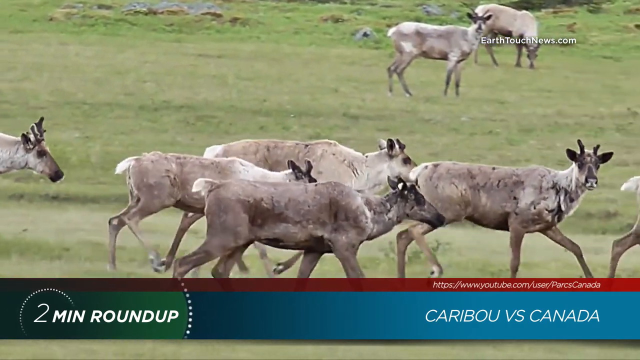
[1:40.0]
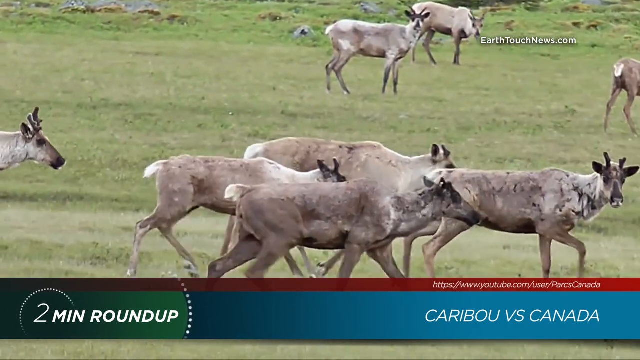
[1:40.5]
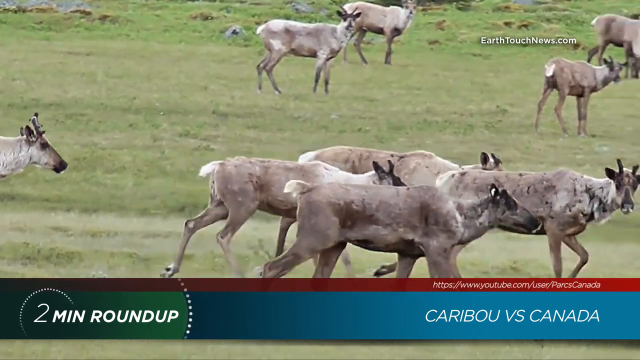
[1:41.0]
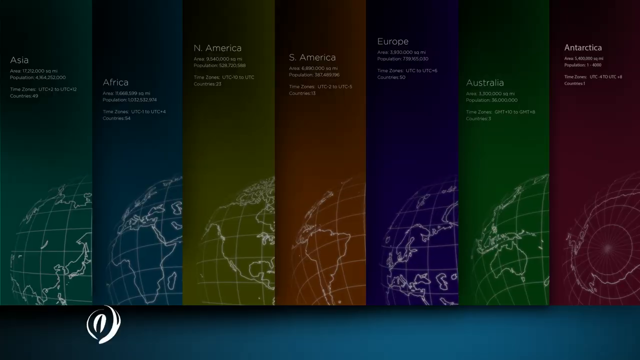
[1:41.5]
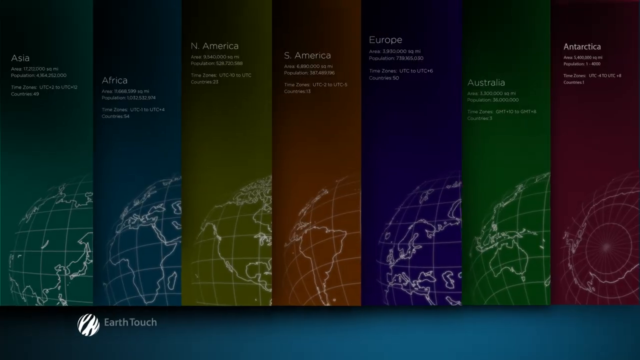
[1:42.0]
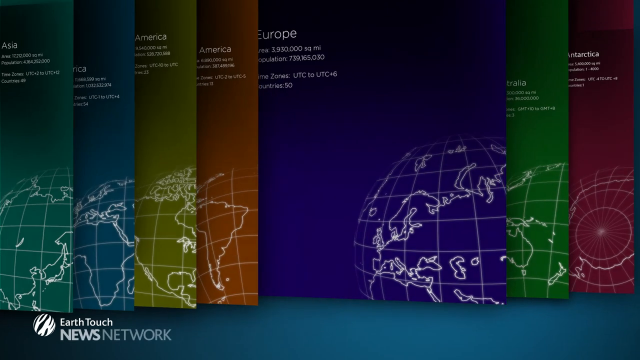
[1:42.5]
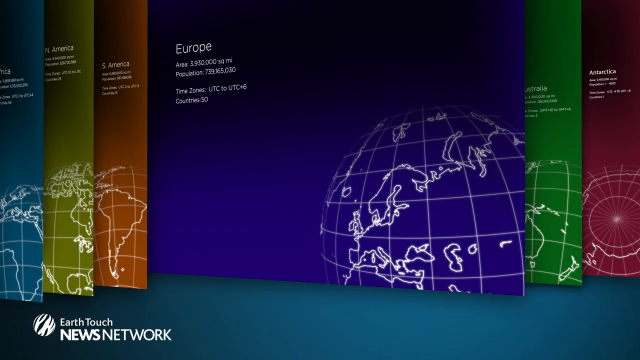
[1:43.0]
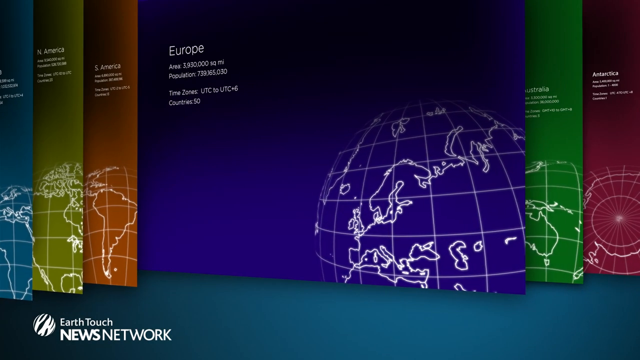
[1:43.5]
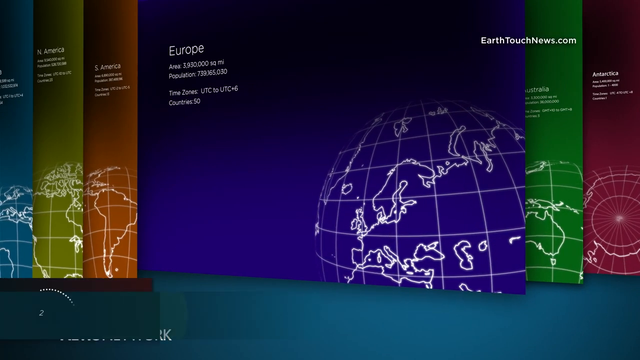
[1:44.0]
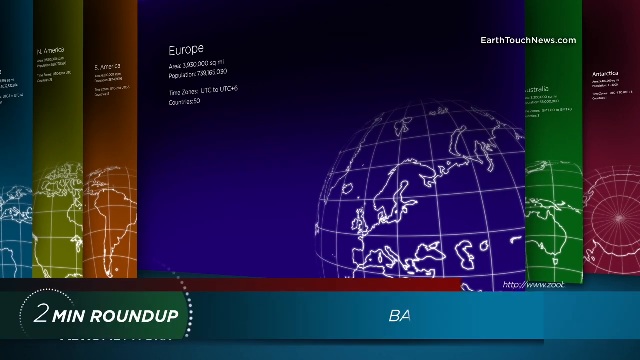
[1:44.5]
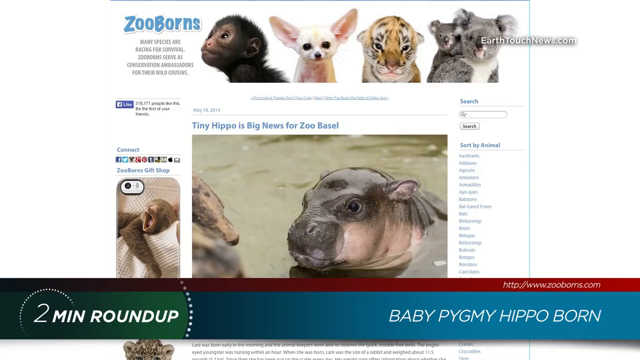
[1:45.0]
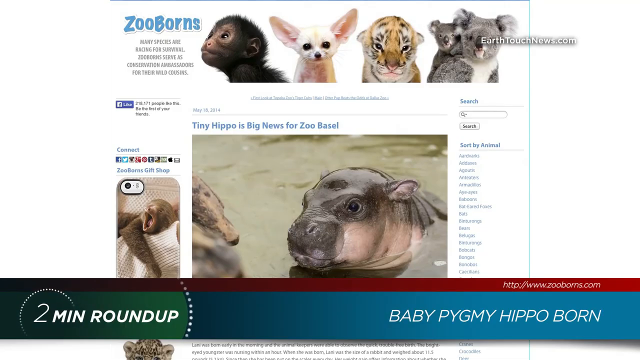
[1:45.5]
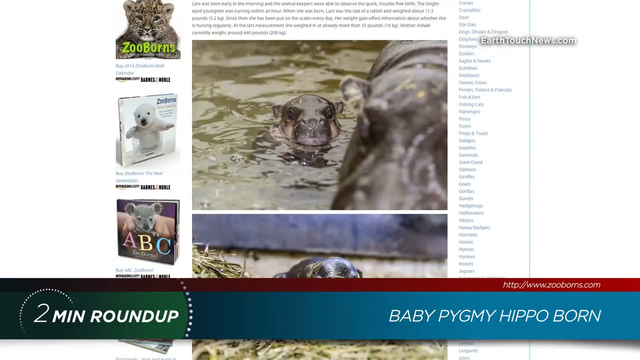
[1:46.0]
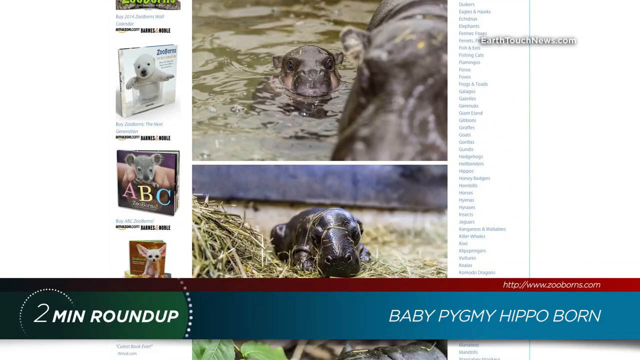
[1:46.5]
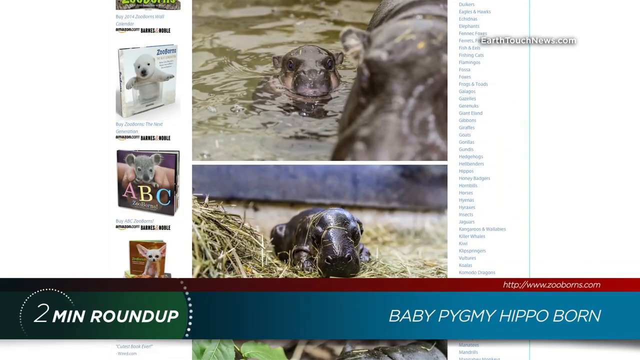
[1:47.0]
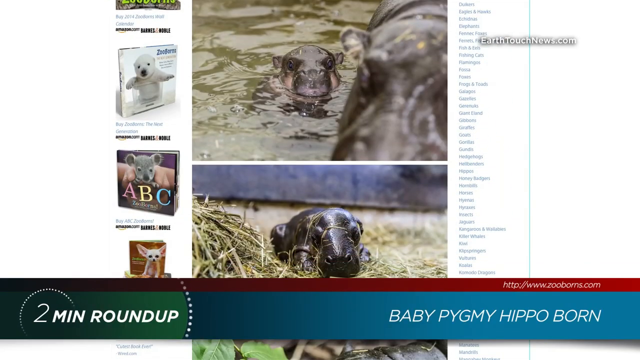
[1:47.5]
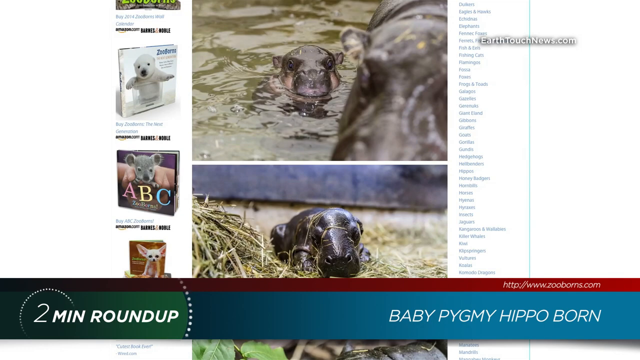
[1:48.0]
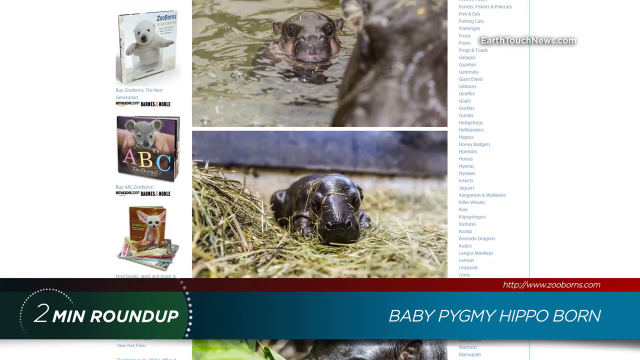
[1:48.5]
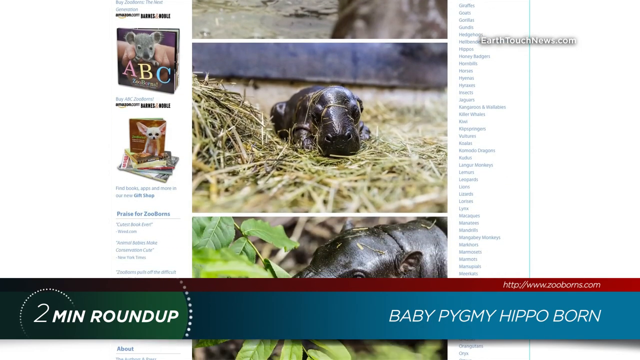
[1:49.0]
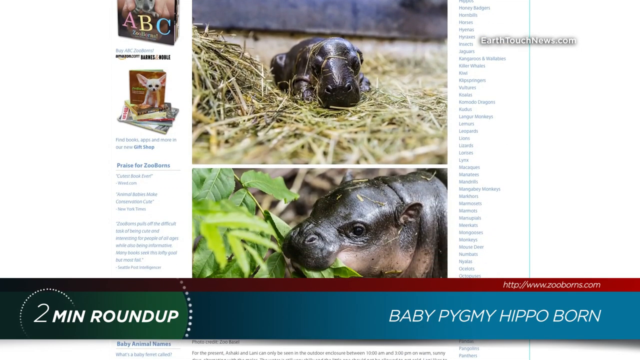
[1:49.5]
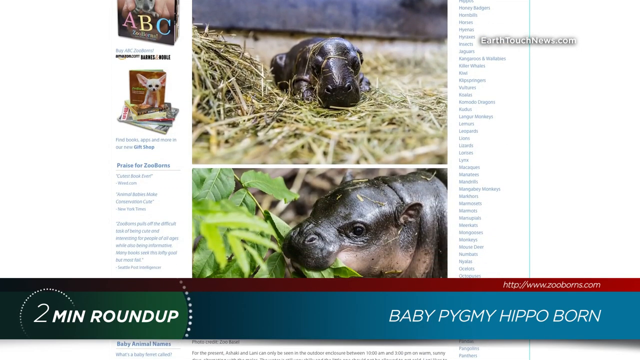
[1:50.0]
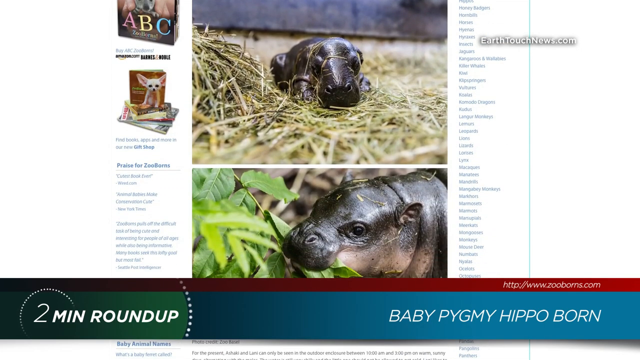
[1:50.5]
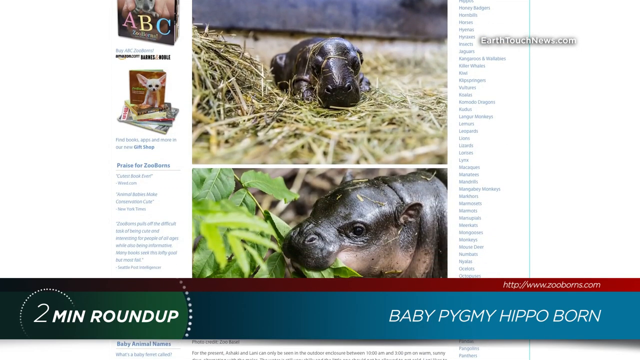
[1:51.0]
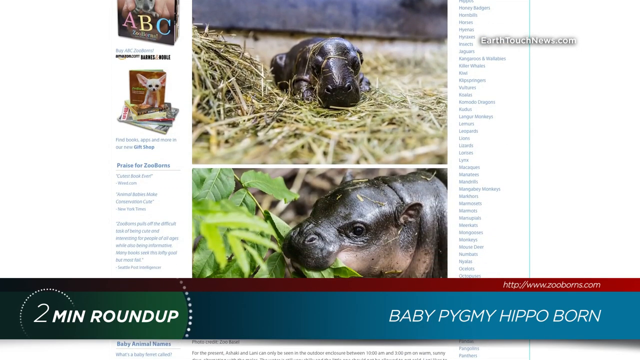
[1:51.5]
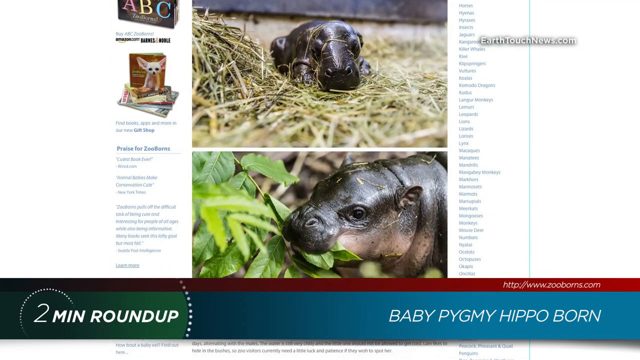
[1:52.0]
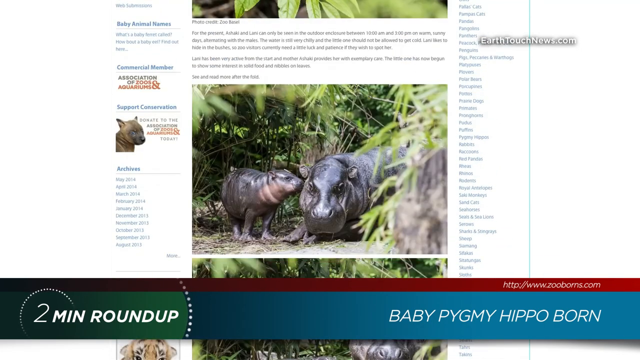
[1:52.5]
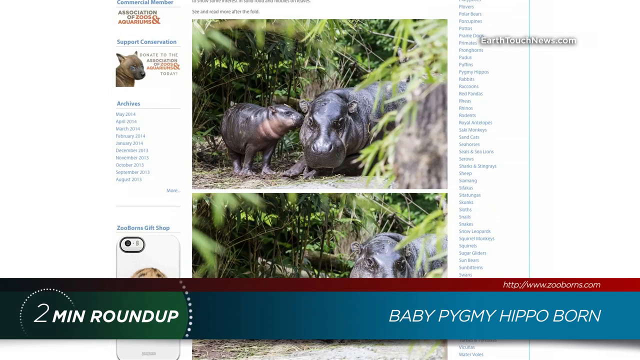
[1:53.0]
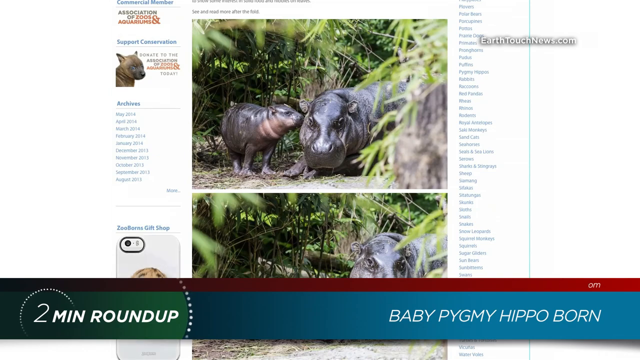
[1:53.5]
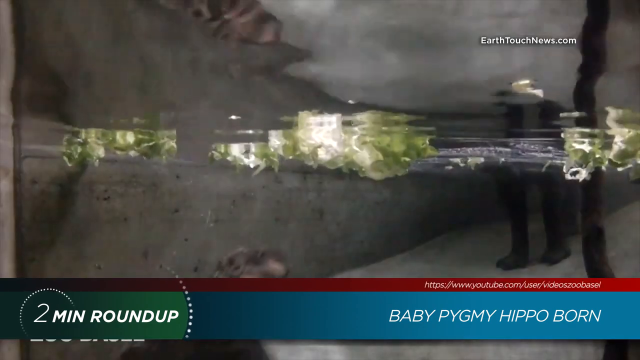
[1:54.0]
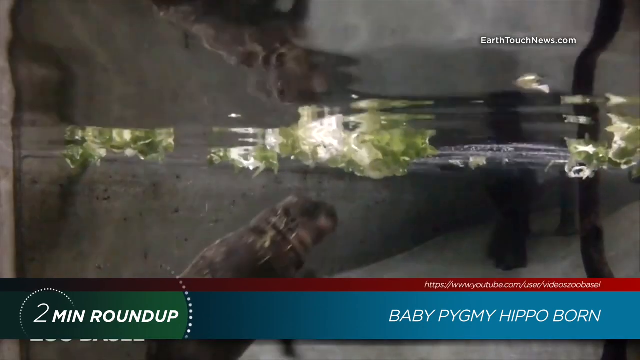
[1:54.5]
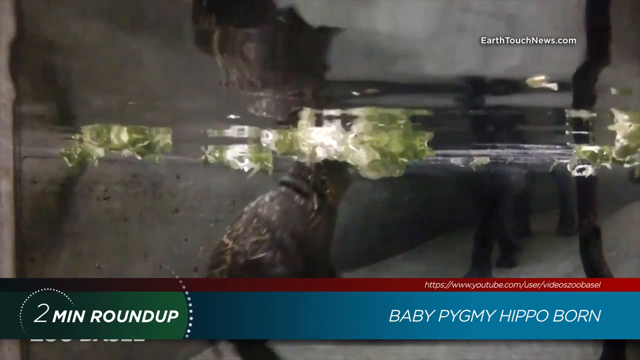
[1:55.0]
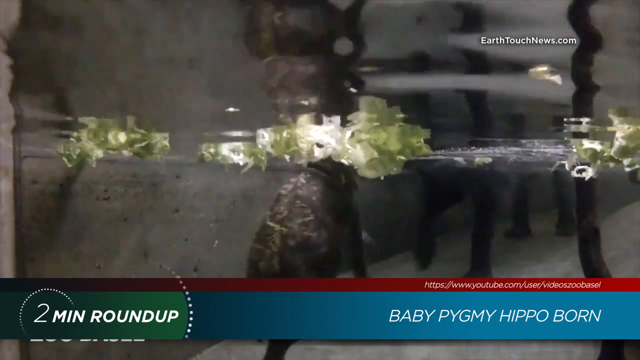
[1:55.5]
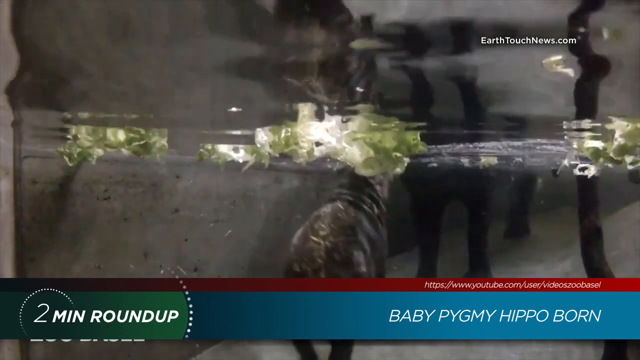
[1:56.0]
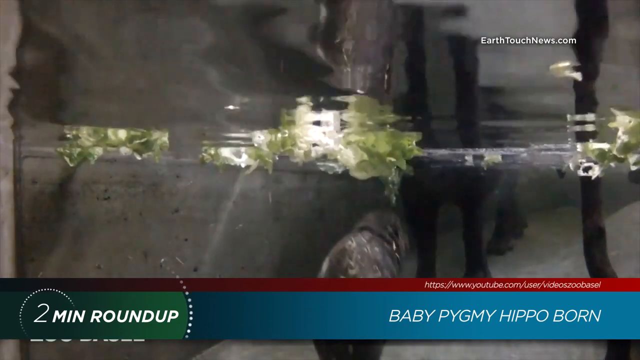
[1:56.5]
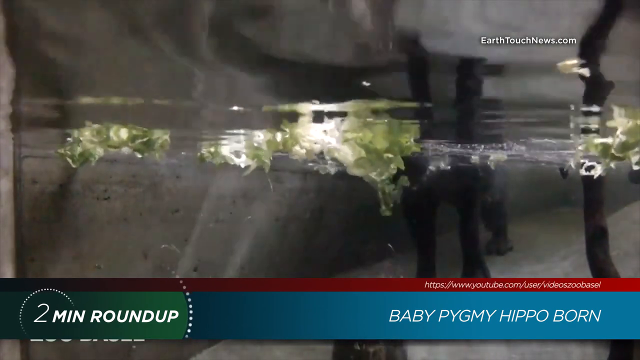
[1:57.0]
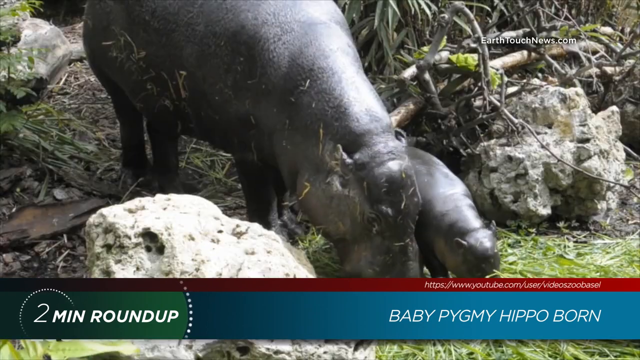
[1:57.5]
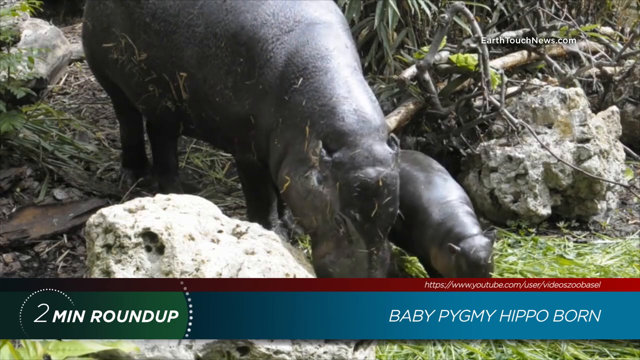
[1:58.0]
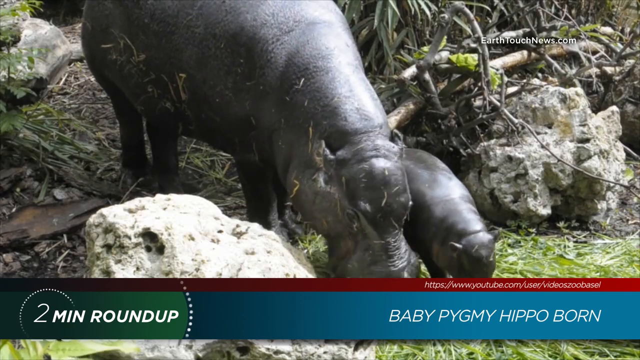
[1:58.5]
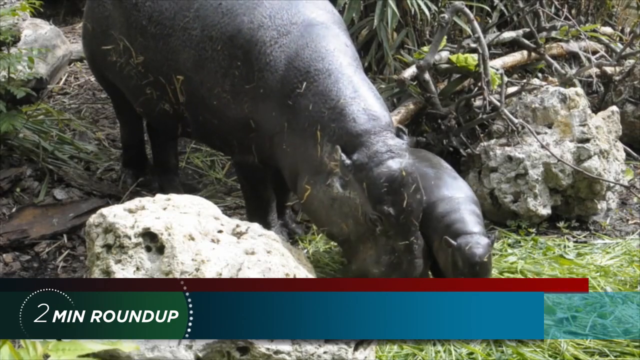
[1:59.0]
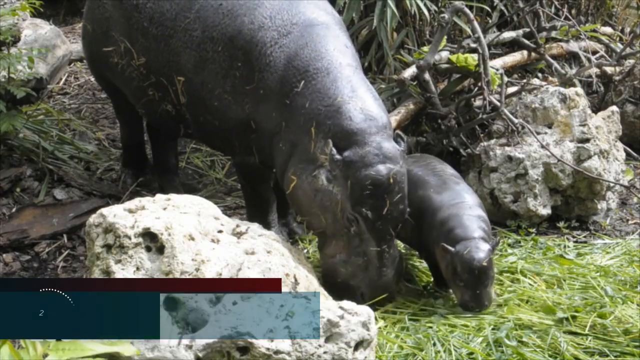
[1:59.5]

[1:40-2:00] A pack of caribou appears to be outside on a sort of grassy terrain. Some have antlers and some don't, and some of the caribou are growing their antlers. They appear to be walking and following something like a path. The video then goes back to Europe, which is on a purple card, and starts showing images of what looks like a baby hippo: in water, in a haystack, and eating from leaves. It cuts to a video of the baby hippo swimming around in water, then to another video of the baby hippo next to what appears to be an older hippo, both eating different greens from the ground. They look like they are in some sort of enclosure.